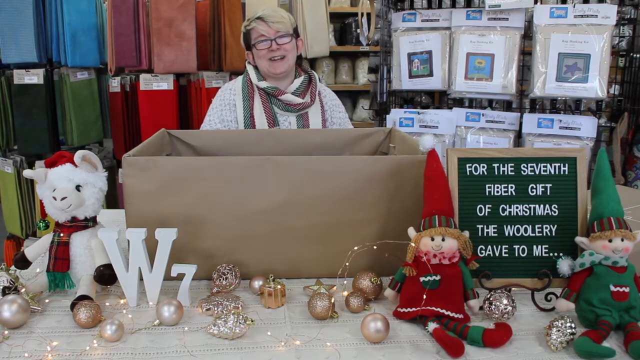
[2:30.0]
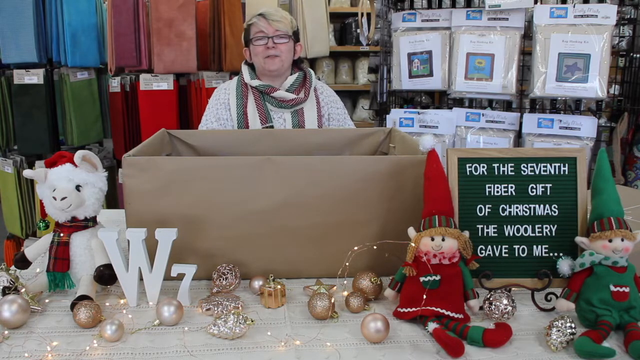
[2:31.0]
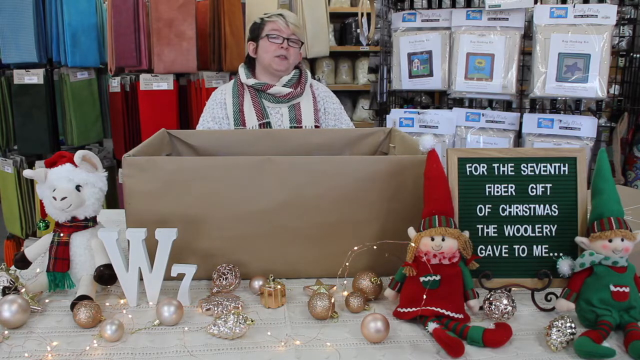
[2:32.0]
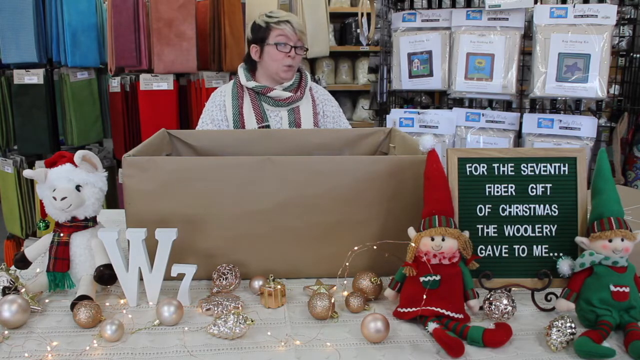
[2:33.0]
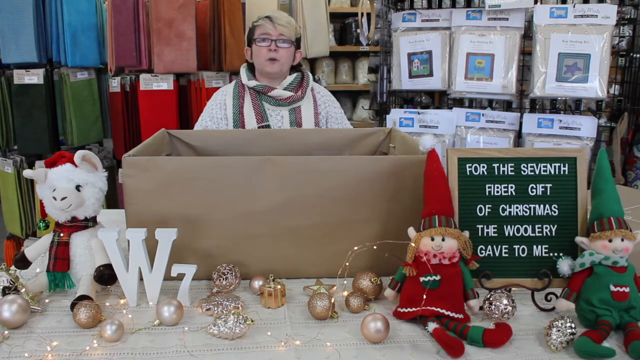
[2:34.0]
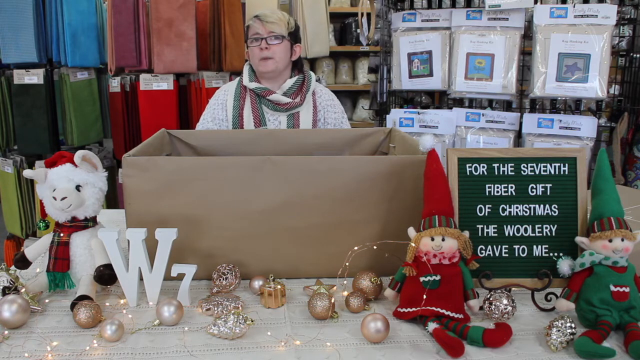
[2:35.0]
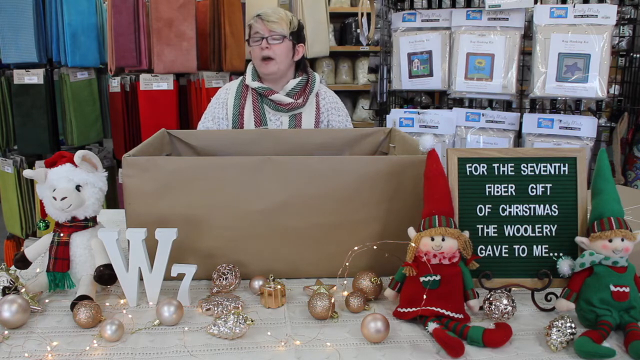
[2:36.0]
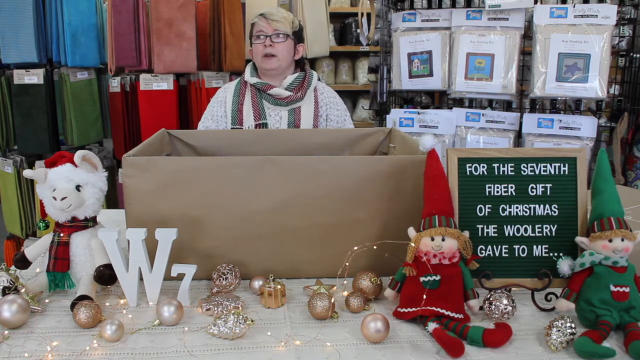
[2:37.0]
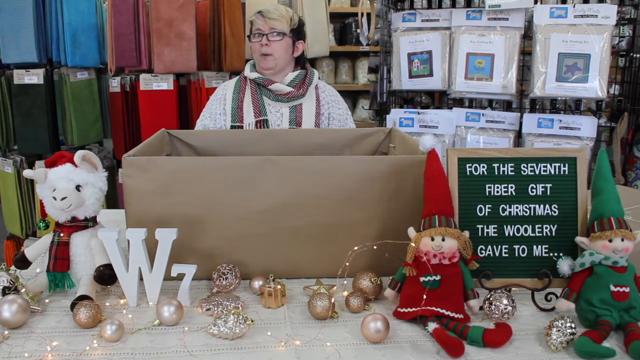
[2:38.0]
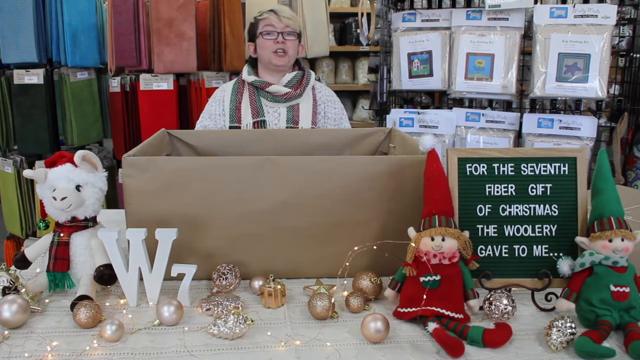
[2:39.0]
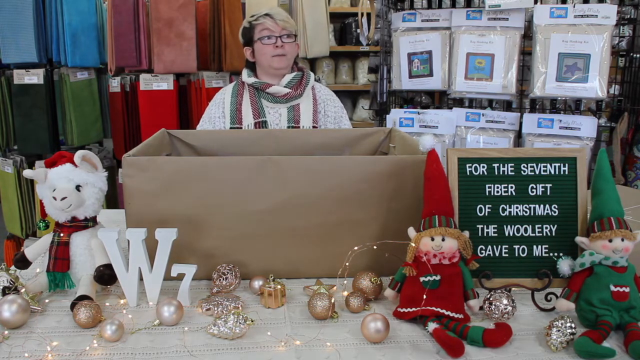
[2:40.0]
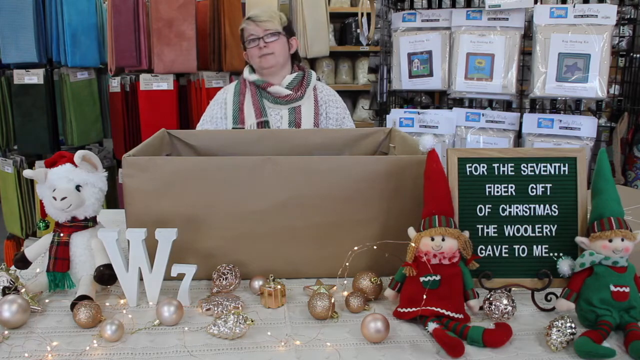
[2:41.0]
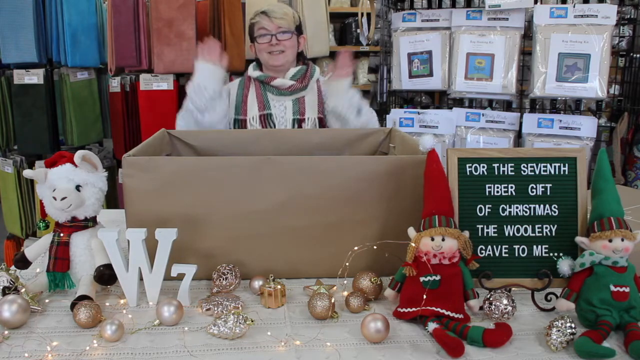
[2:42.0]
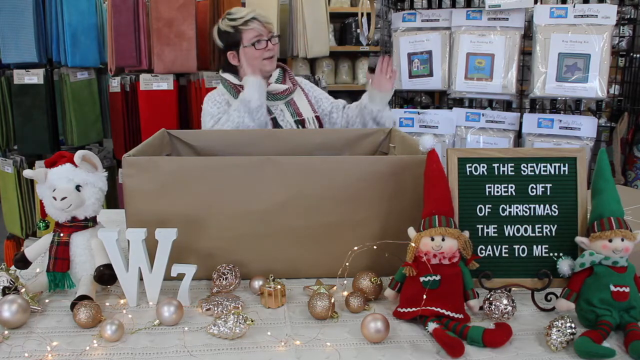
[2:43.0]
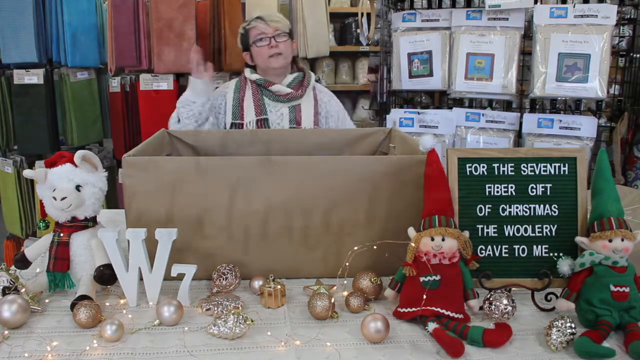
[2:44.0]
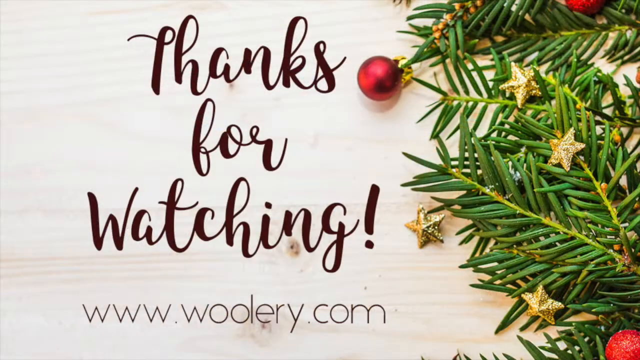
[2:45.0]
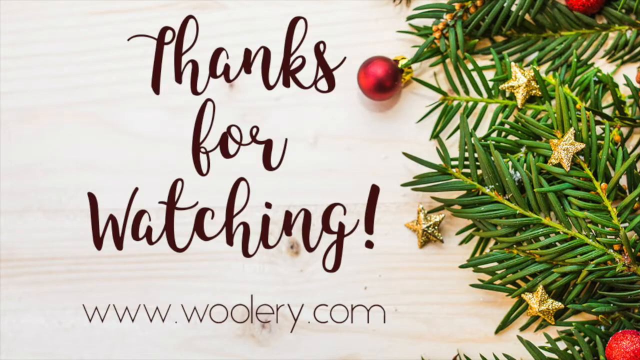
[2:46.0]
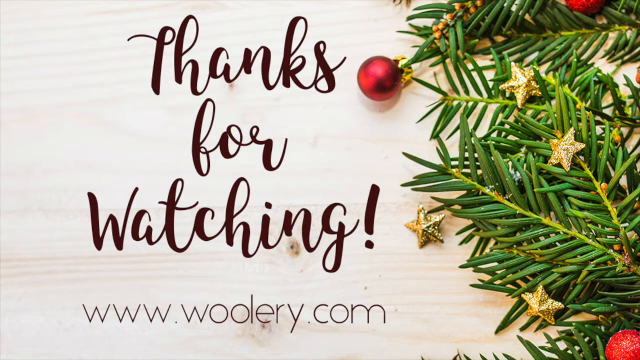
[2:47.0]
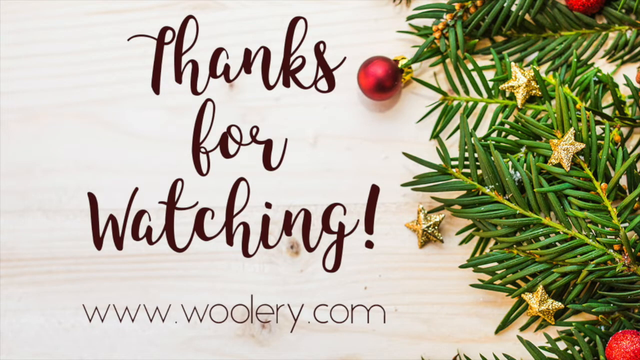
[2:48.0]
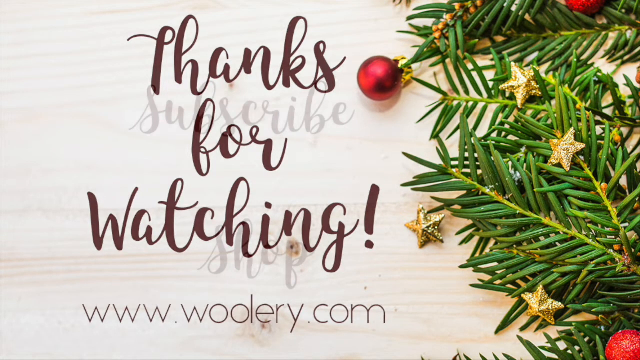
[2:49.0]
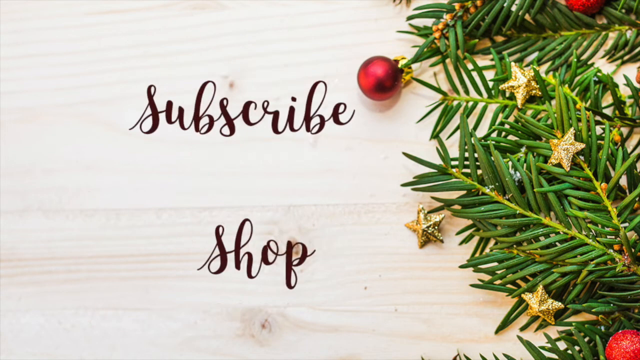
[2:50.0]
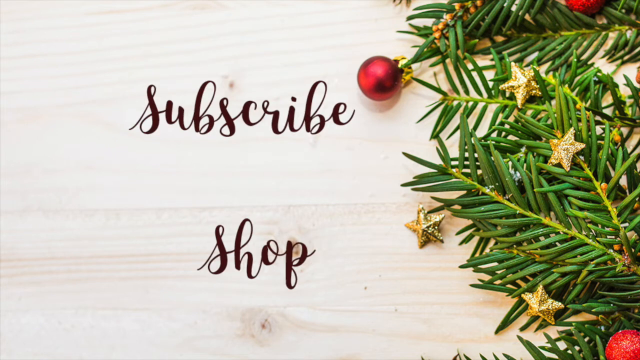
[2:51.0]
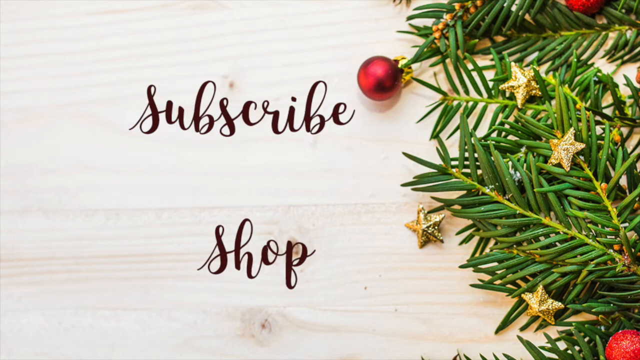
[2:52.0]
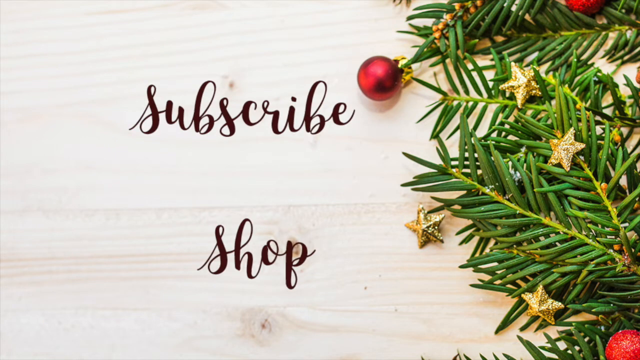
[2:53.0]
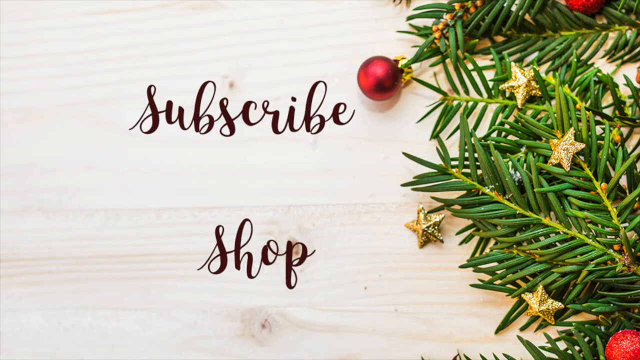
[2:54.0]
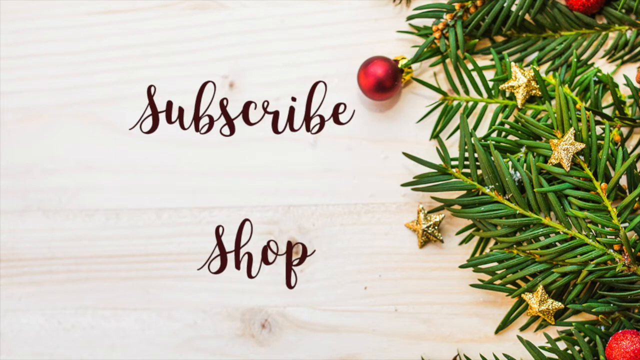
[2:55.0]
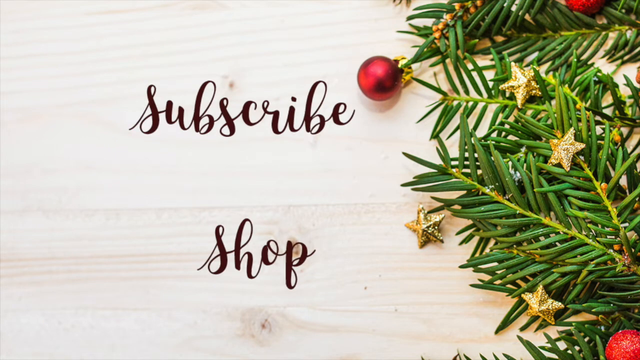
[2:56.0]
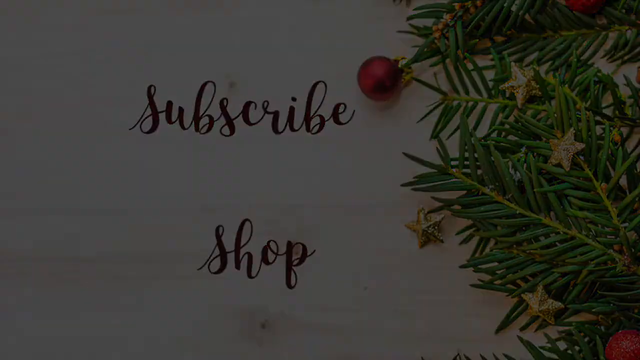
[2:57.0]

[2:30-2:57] A person stands behind a large brown box, wearing a white sweater and a scarf with green, red and white stripes. The person has short brown hair with blonde highlights and wears glasses. In front of the box, a W and a 7 stand on the table, and to the left of the box is a white stuffed animal wearing a red hat and a red plaid scarf with green fringes. To the right of the box is a signboard with the message "For the seventh fiber gift of Christmas, the Woolery gave to me." On either side of the signboard is a small elf toy; the elf on the left wears red and the elf on the right wears green. The person continues to speak, looking at the camera, smiling and dancing occasionally, and moving their hands in the air with excitement. The video fades out to a close-up of a Christmas wreath on the right, with a message on the left that says "thanks for watching" and a URL for Woolery.com. The "thanks for watching" message fades out and is replaced by a message that says "subscribe and shop."